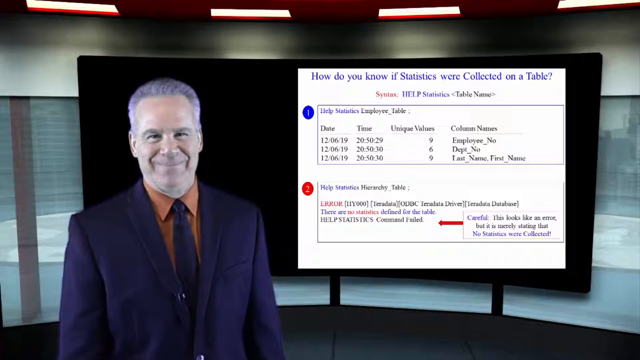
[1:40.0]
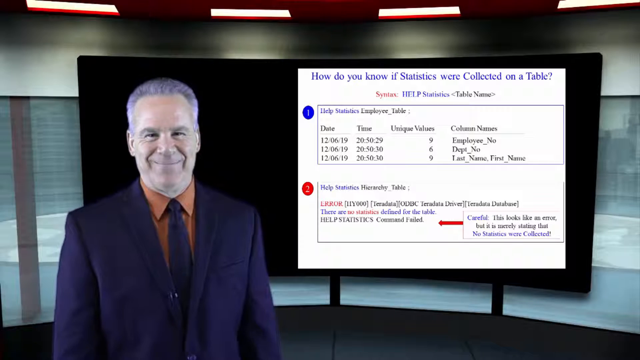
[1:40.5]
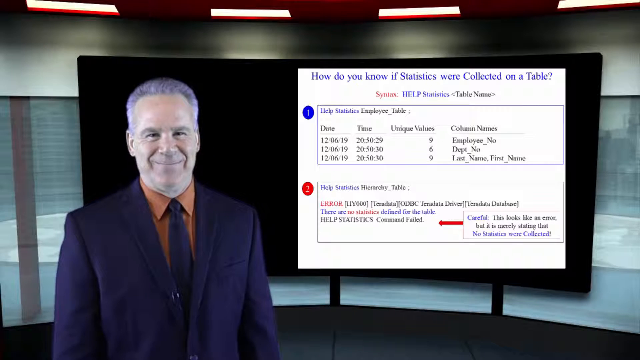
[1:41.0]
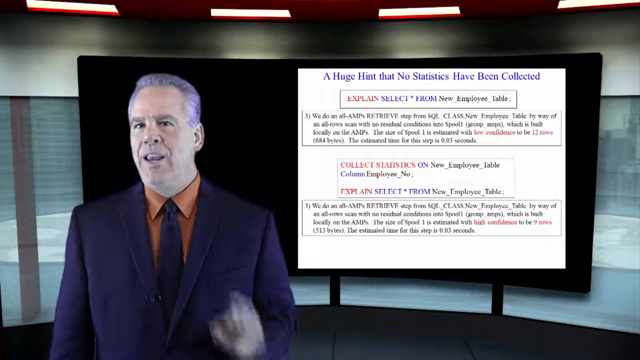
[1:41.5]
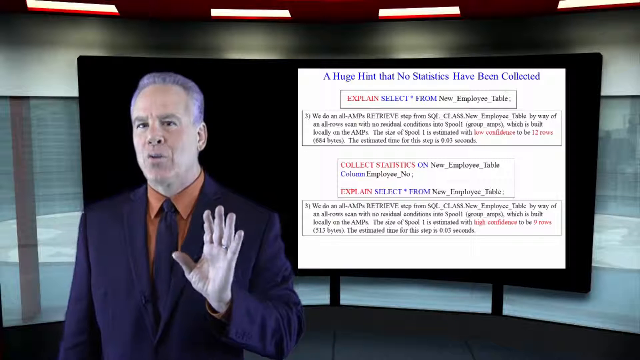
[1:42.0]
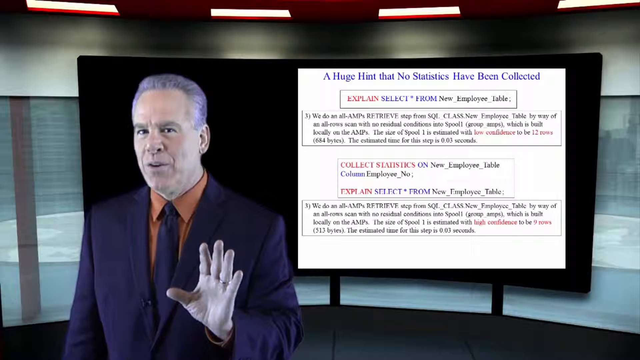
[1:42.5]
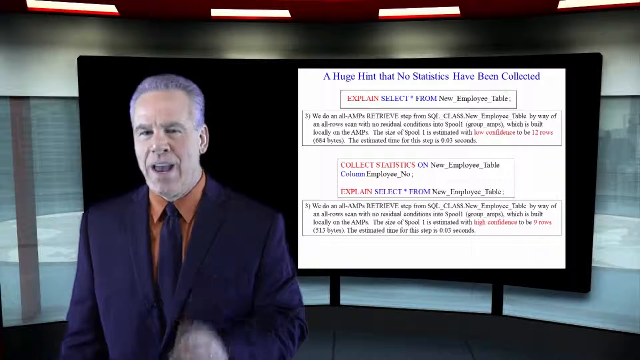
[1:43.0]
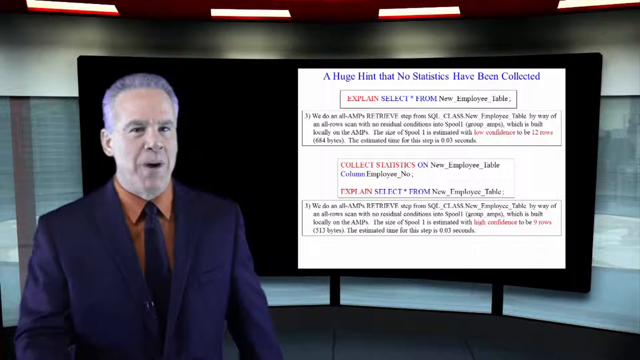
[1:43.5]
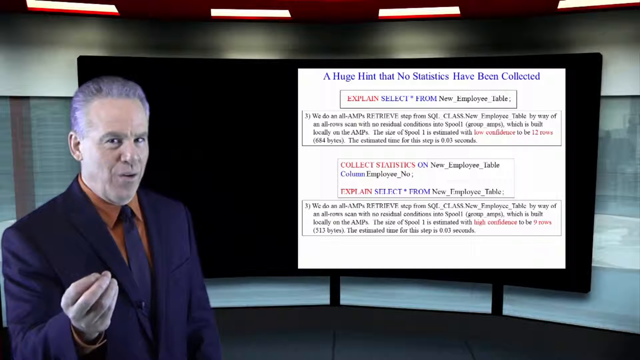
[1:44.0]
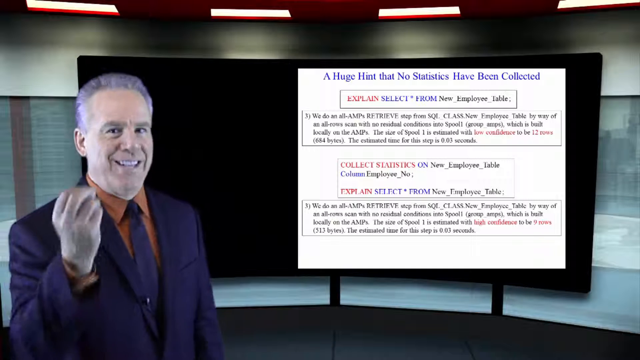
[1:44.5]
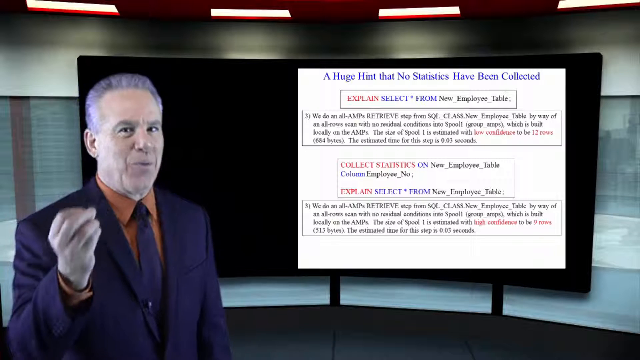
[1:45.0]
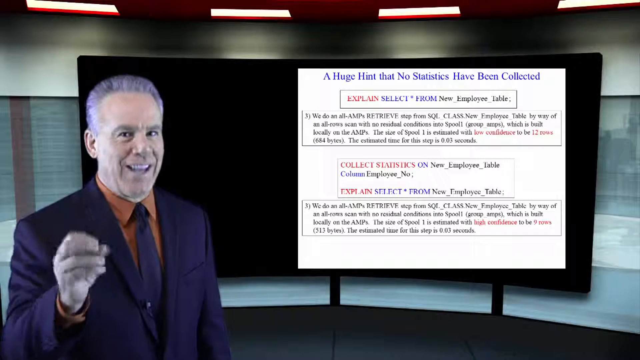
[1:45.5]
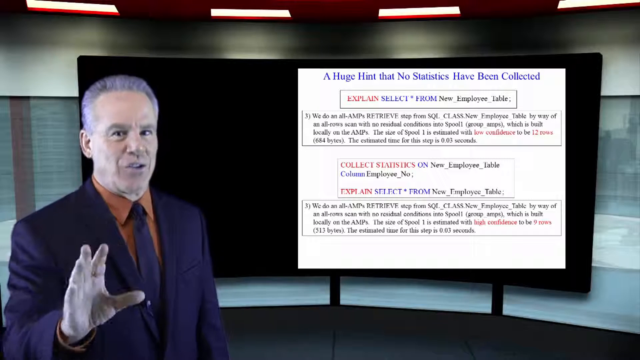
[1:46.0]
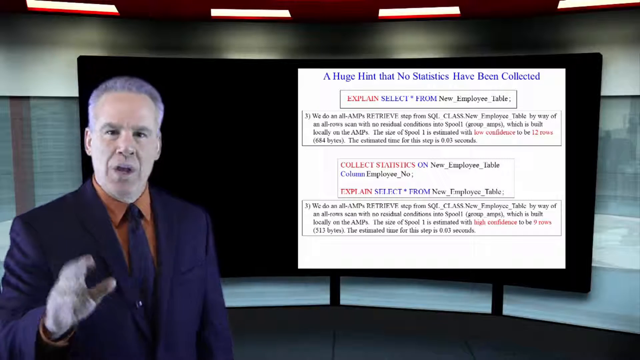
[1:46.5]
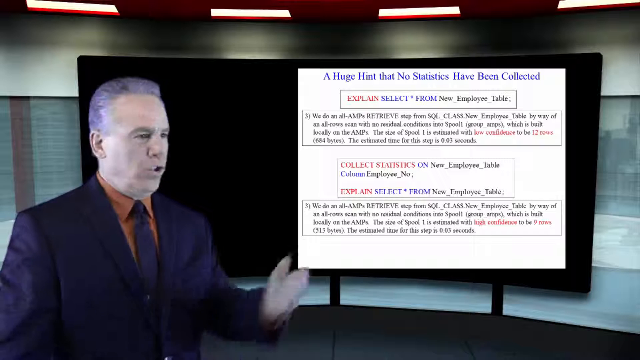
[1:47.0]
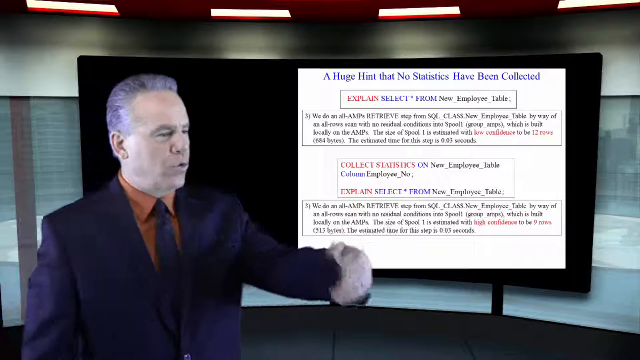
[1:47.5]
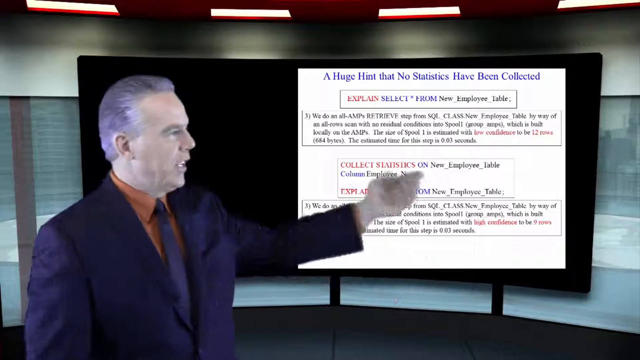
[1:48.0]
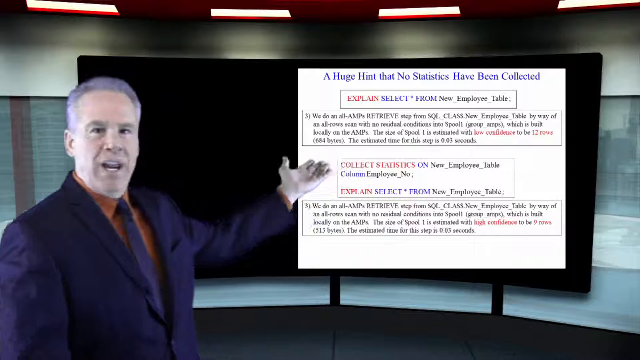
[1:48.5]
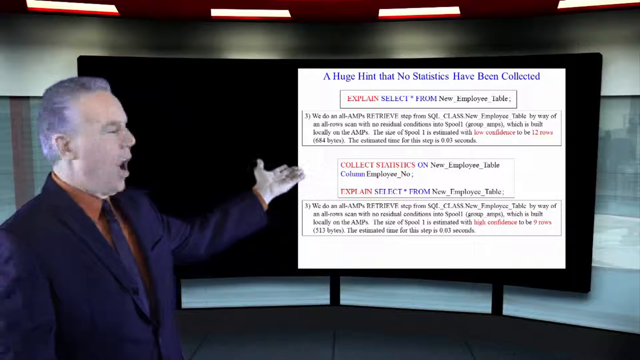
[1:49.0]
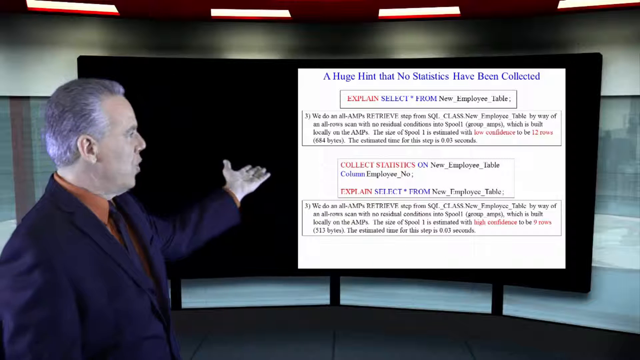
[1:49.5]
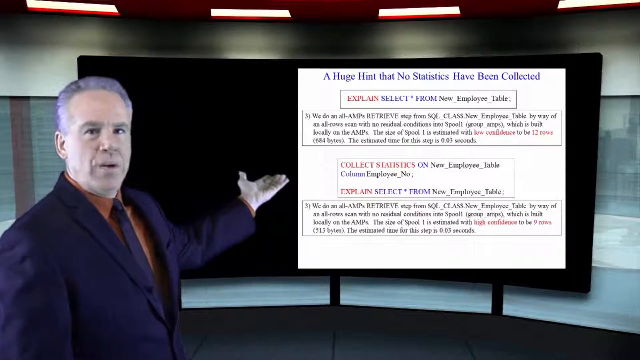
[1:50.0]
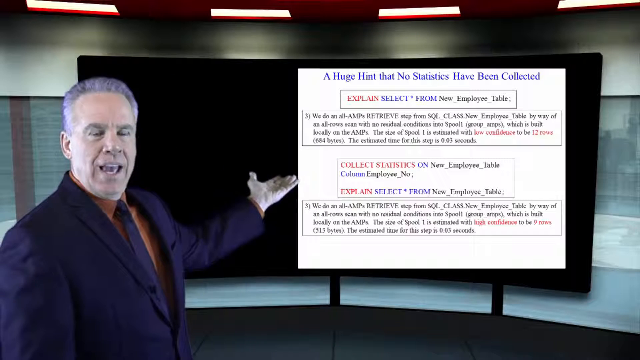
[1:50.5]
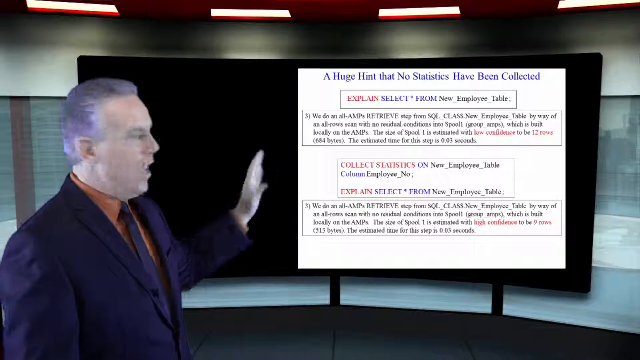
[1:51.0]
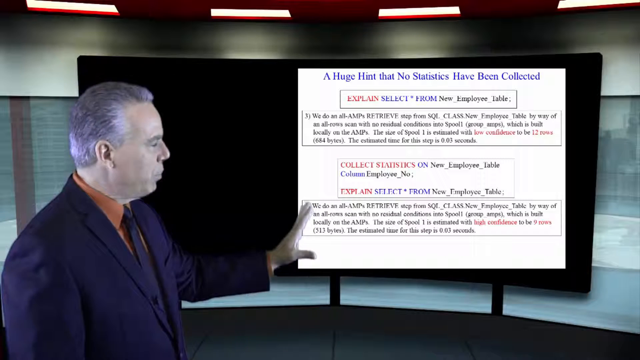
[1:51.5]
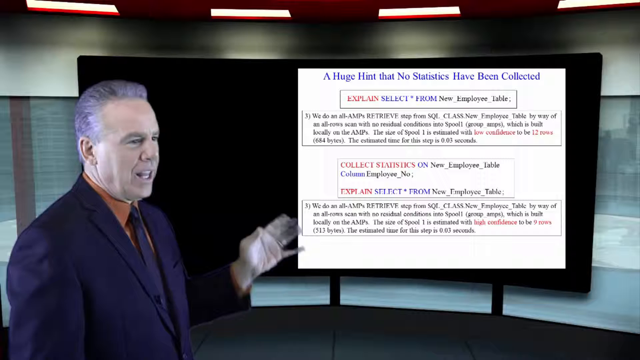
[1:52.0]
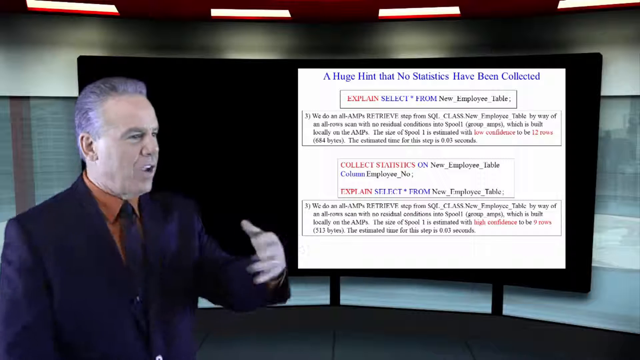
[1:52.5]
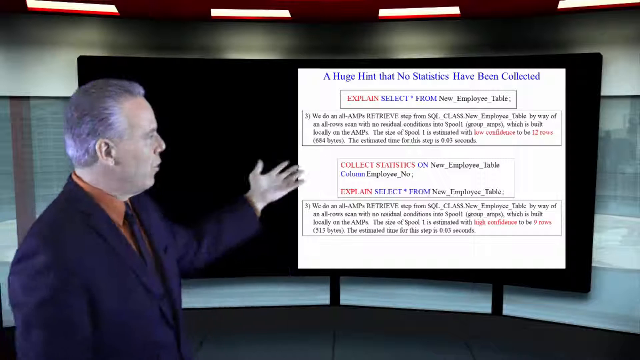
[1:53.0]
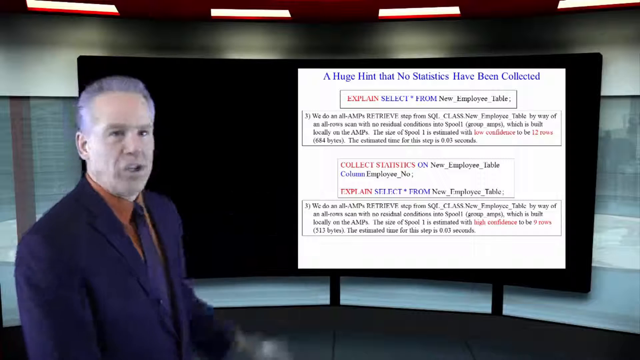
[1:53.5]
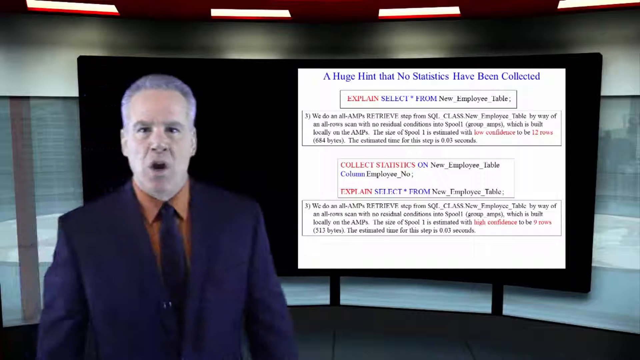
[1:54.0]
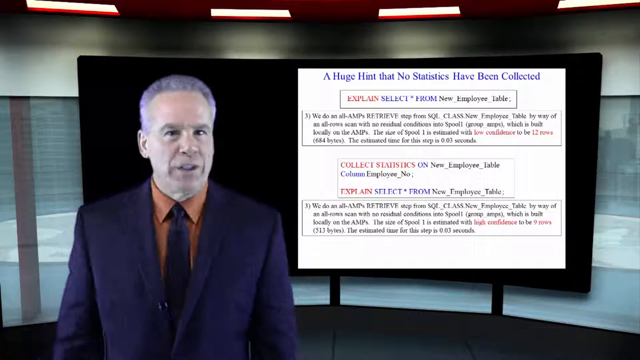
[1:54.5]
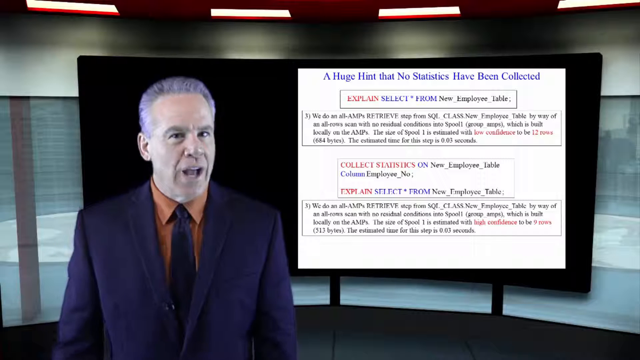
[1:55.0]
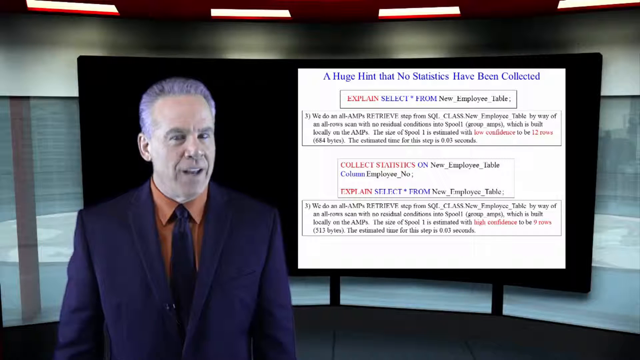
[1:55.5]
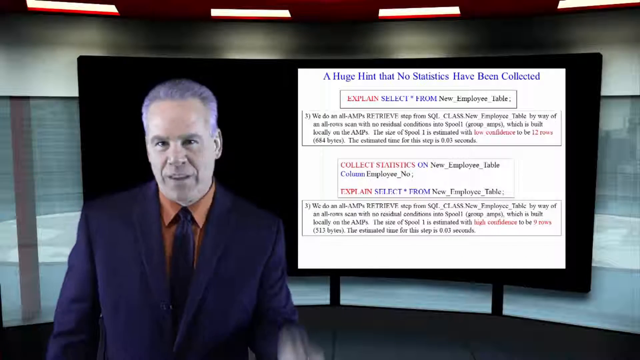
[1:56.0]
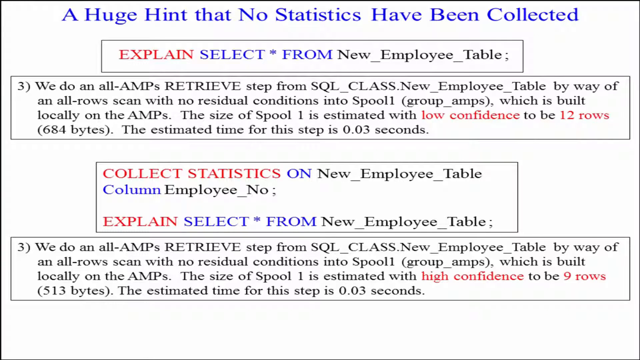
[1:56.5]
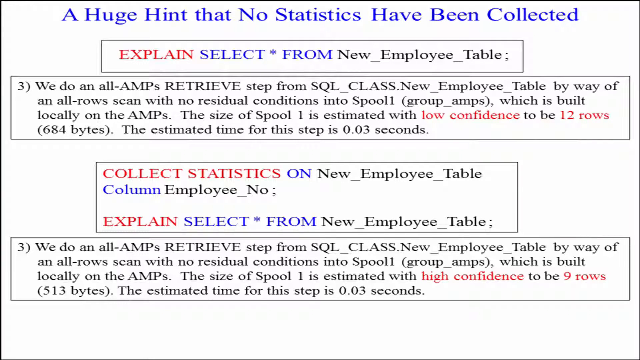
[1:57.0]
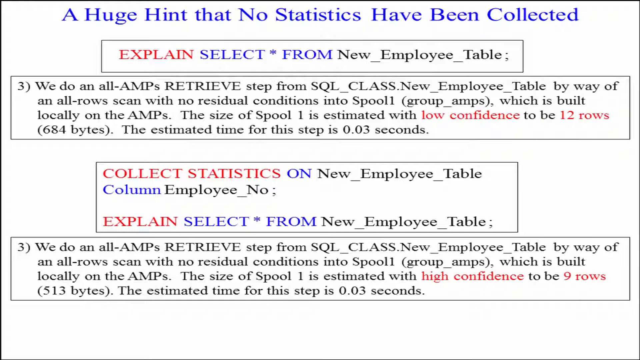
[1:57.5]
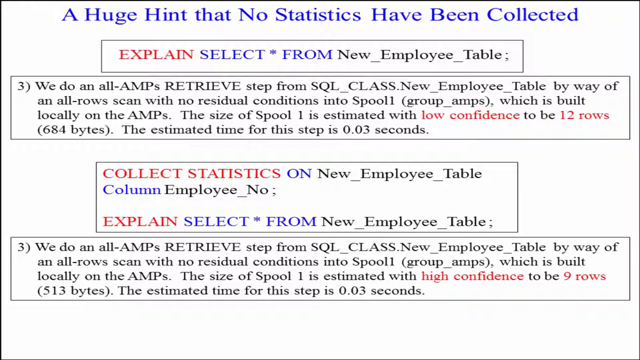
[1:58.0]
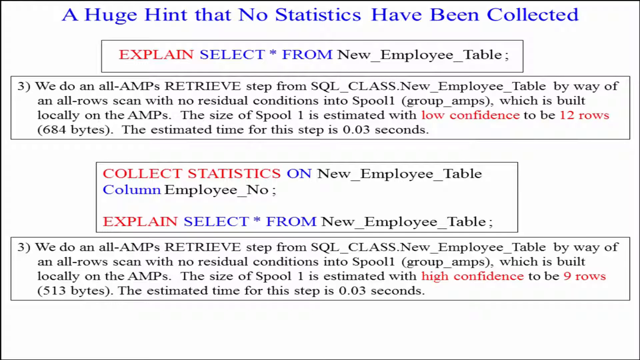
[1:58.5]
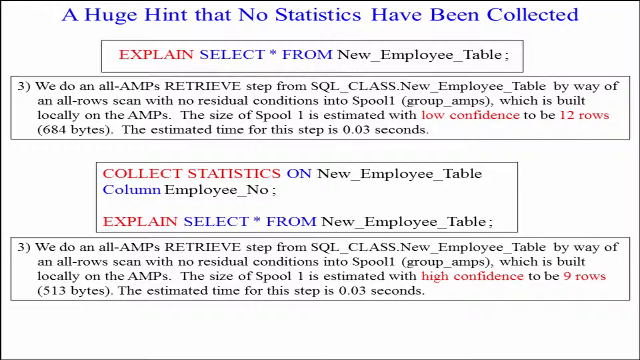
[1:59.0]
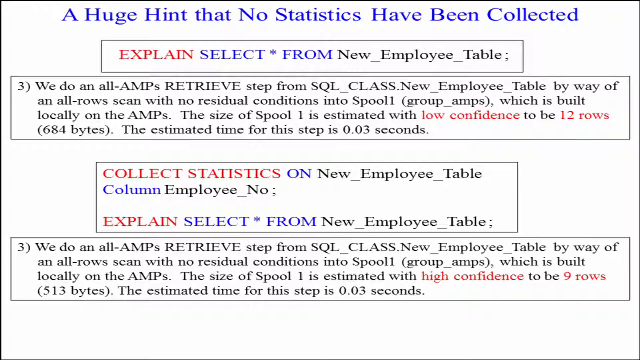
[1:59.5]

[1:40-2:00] A man looks as though he is giving an online lecture. The screen in the background is titled "A Huge Hint That No Statistics Have Been Collected," with some red and black text that is a little too hard to read. The man stands in the foreground; he is Caucasian, with dark hair silver at the crown and temples, combed straight back, and wears a dark suit, a dark tie and a brown collared shirt. He smiles as he speaks and gestures fluidly with his hands towards the chart, seeming to indicate that what is on the screen is very important and educational. The video then cuts to a close-up of the screen.